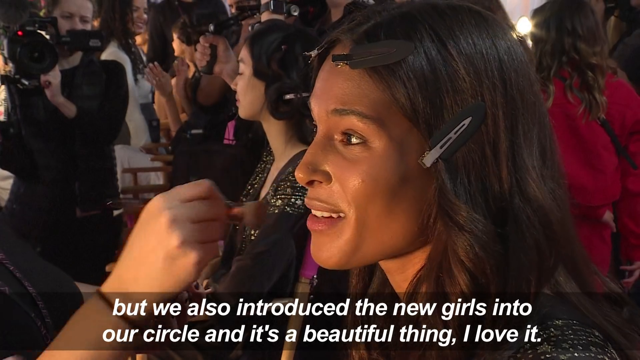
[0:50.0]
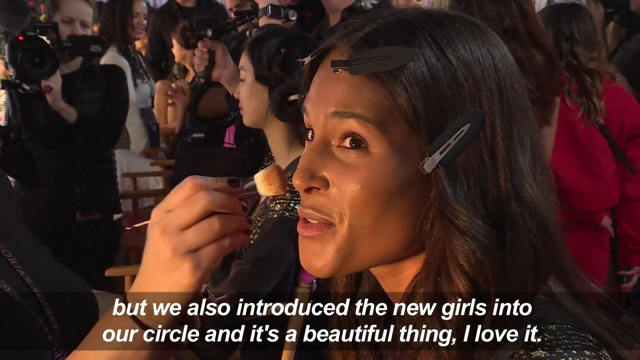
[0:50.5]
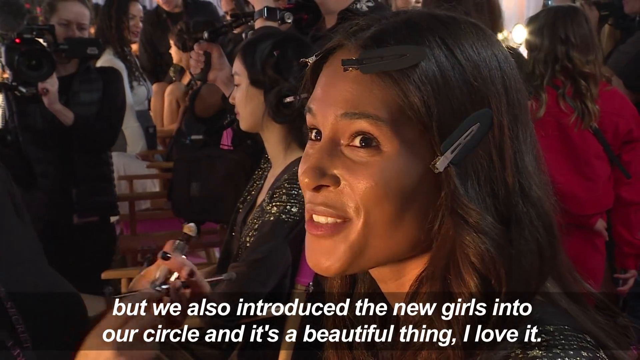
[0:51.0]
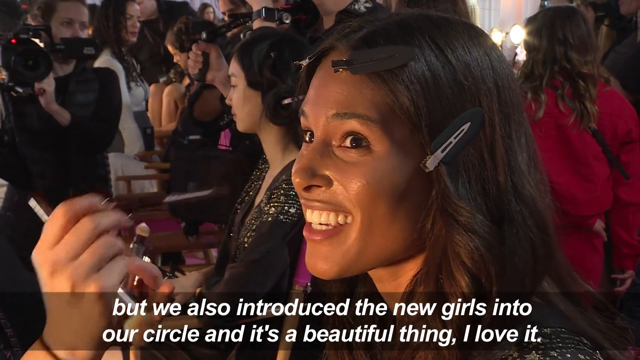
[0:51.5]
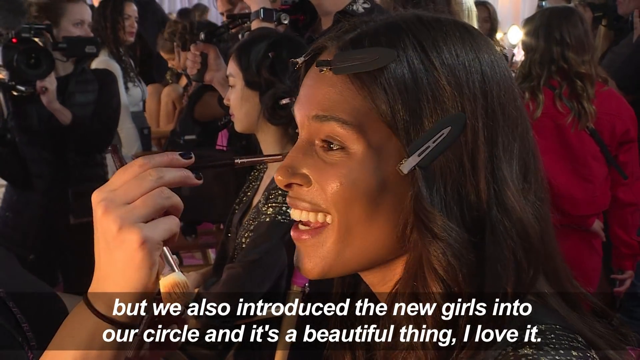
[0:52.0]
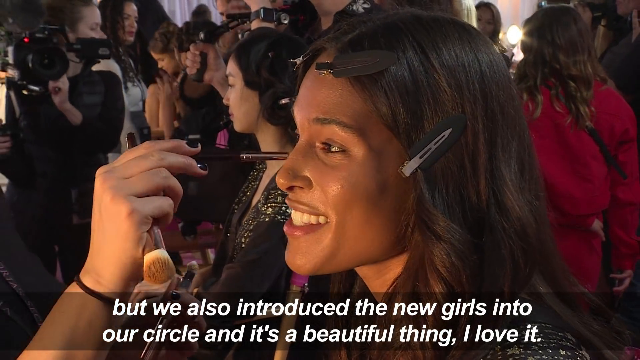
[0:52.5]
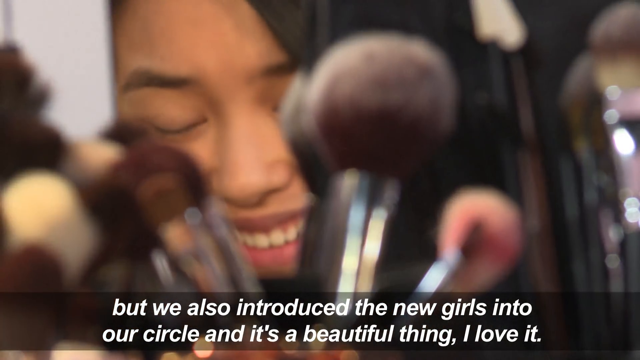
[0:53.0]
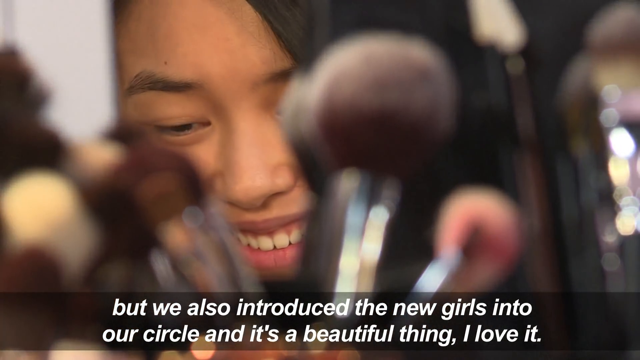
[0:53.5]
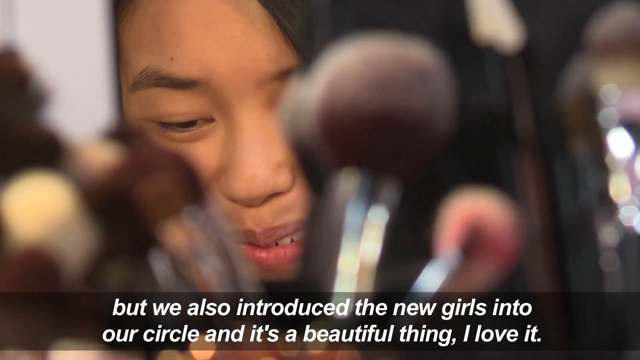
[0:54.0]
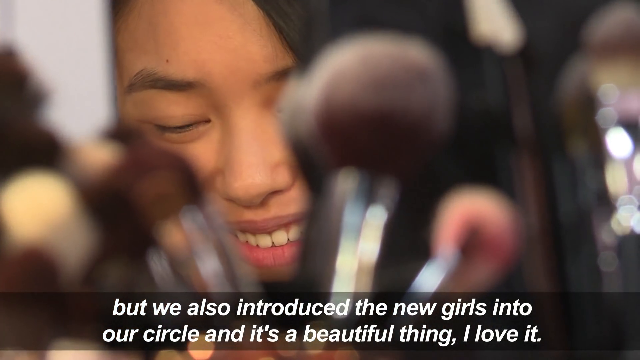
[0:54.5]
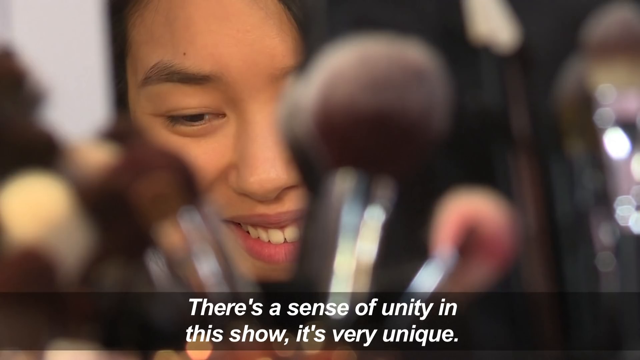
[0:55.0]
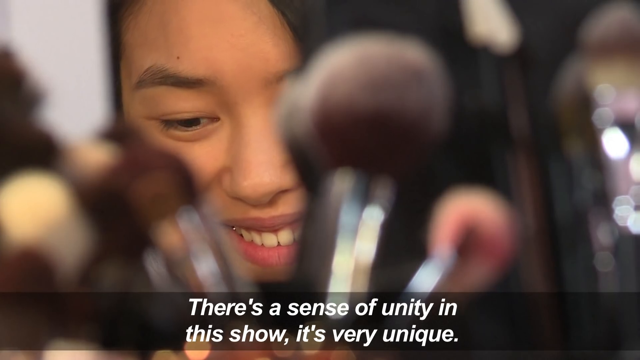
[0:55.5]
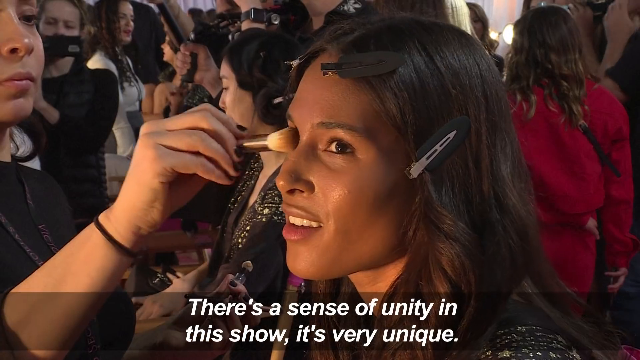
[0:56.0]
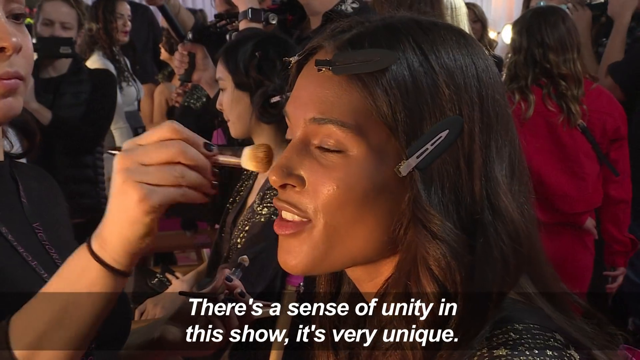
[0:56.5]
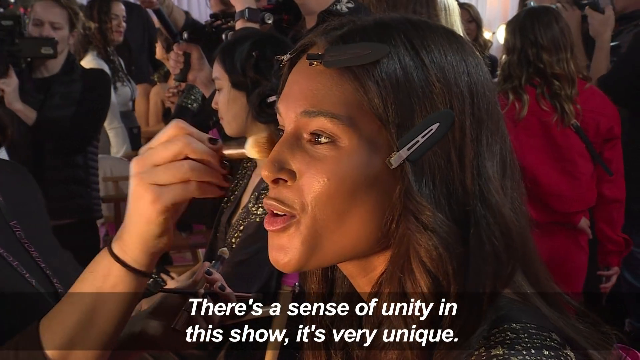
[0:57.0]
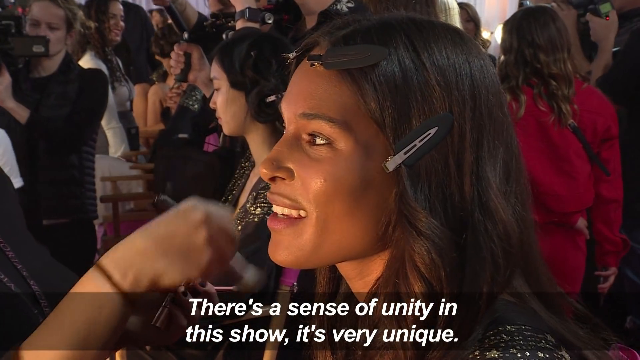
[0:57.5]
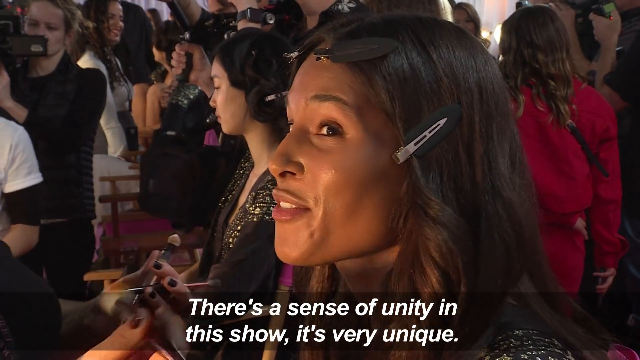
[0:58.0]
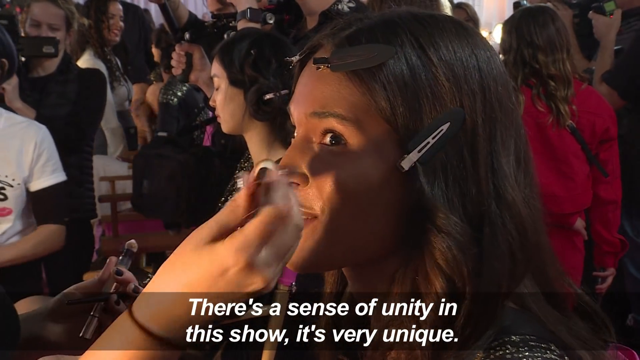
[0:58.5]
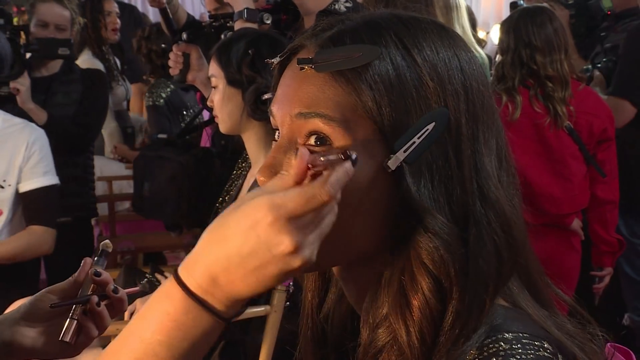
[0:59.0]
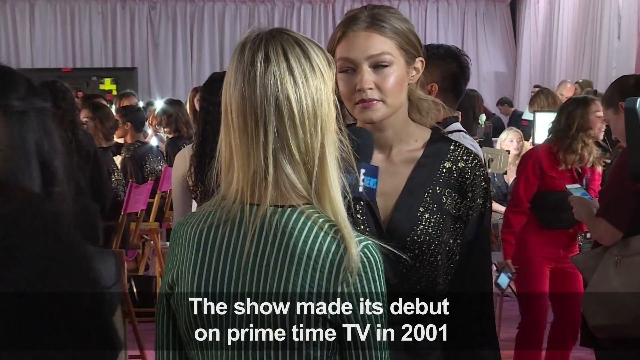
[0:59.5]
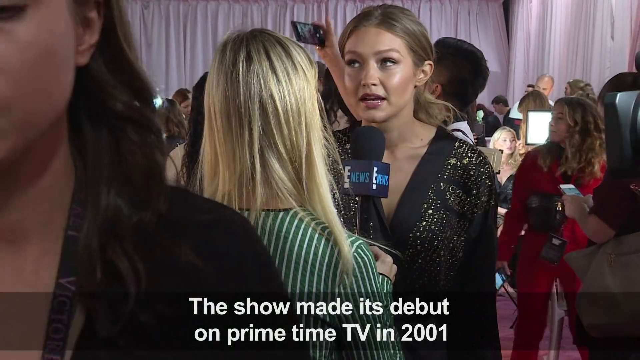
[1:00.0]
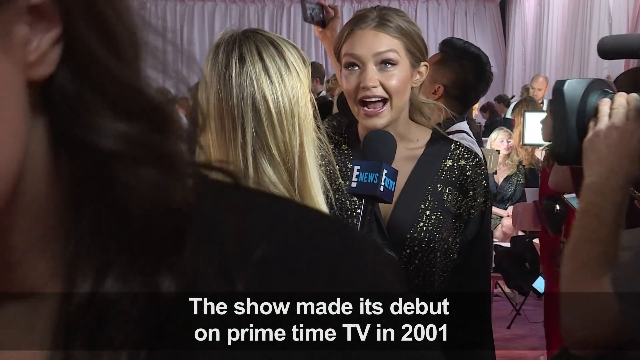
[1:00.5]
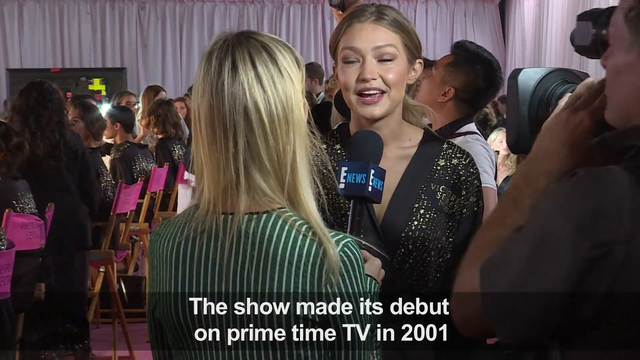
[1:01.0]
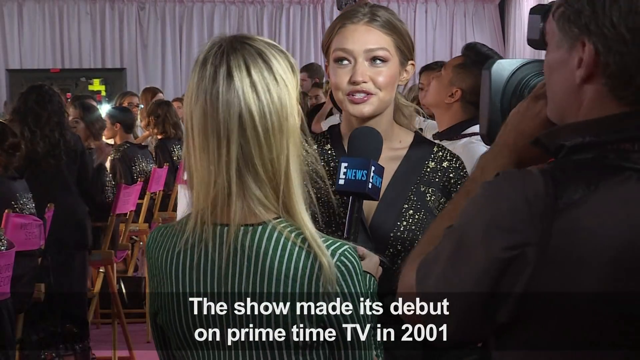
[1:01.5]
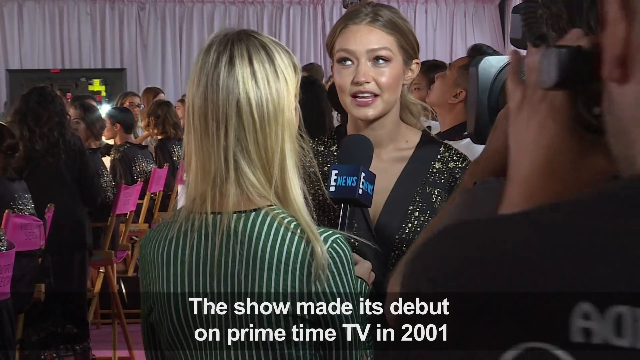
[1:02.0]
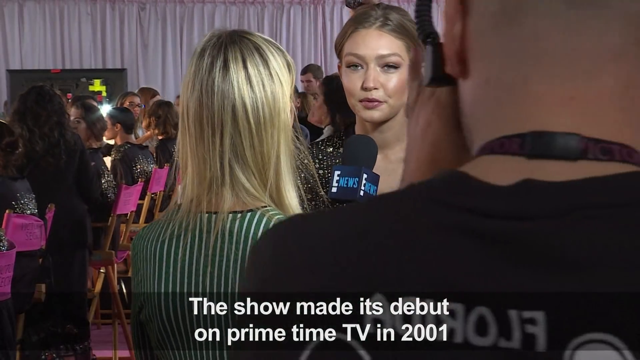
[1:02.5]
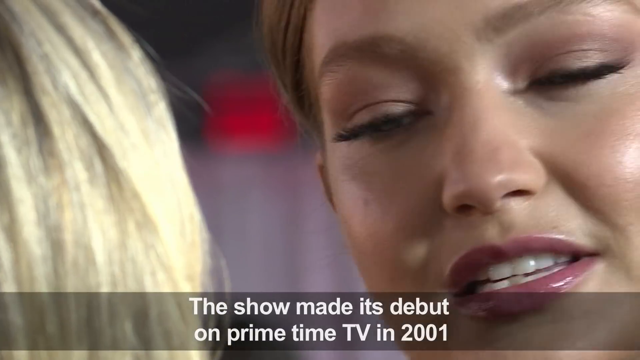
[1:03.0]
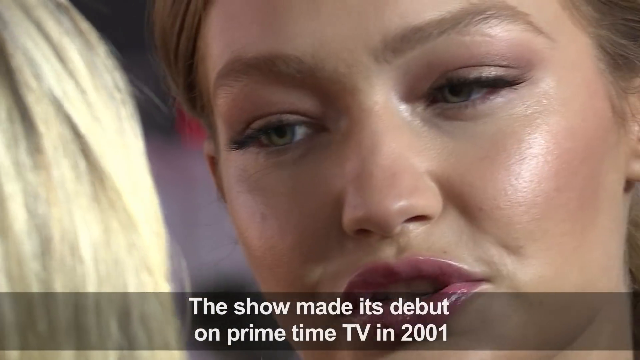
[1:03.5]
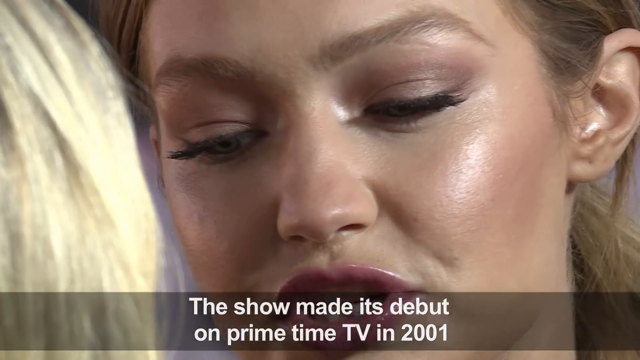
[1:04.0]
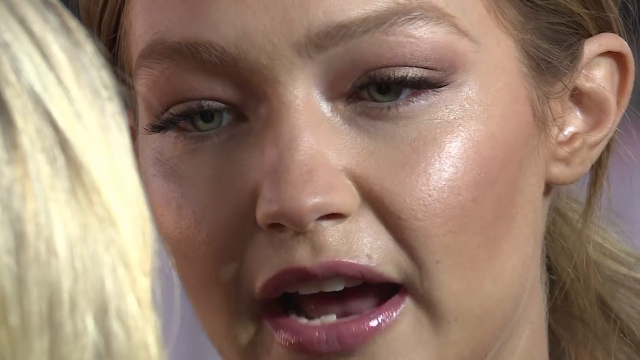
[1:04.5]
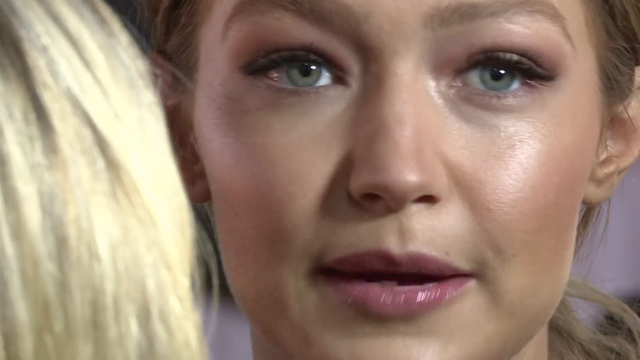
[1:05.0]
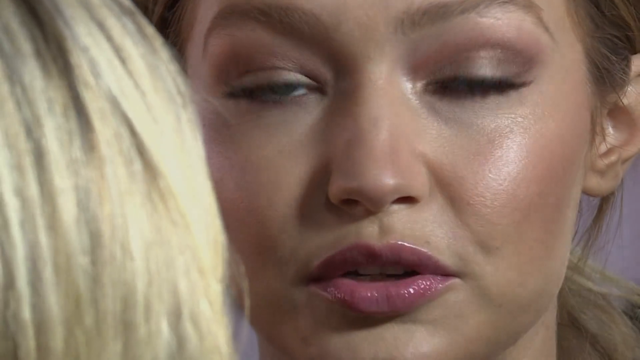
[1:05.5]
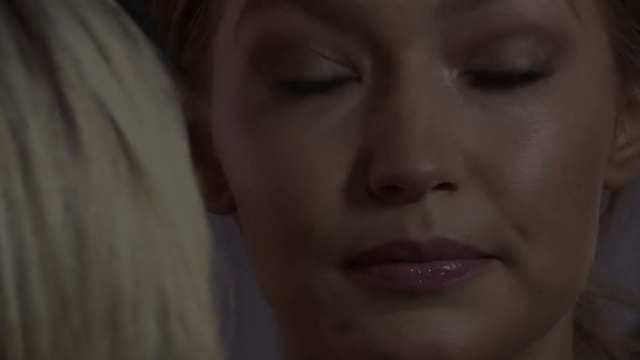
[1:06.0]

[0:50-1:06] Models are being made up, and one model is talking: "but we also introduced the new girls into our set and it's weird it's a beautiful thing I love it," followed by "this sense of unity this show it's just it's very unique." Text states that the show made its debut on prime tv in 2001. The video ends on the model talking about the show, then cuts to a blank black screen.